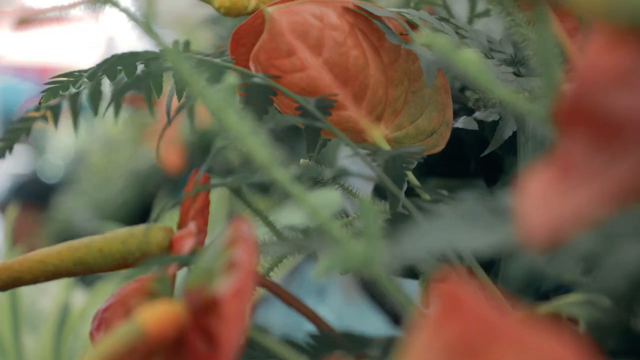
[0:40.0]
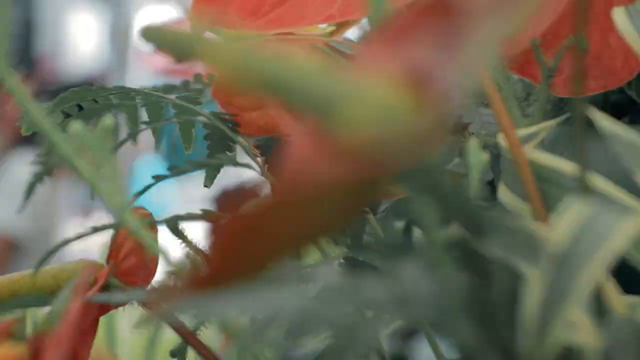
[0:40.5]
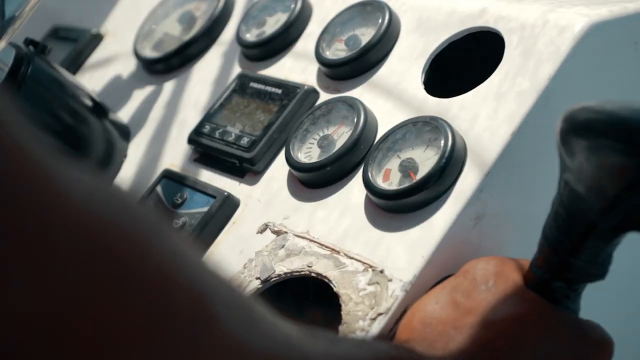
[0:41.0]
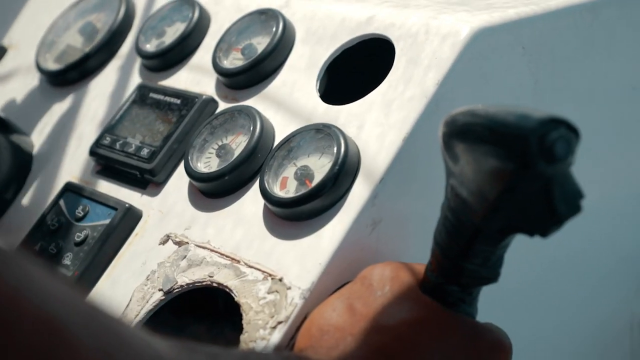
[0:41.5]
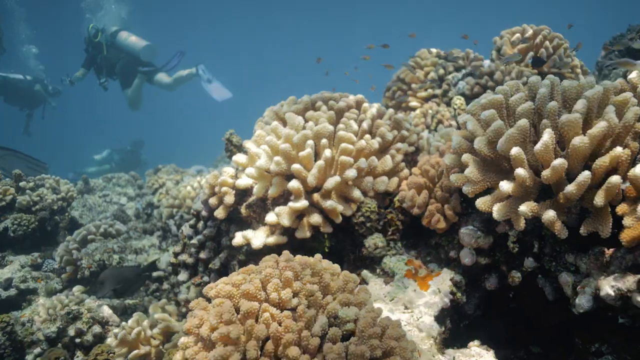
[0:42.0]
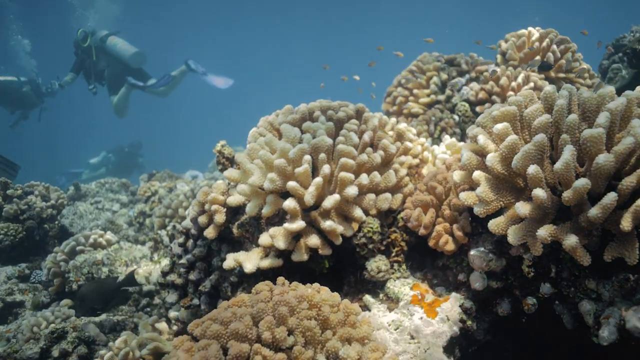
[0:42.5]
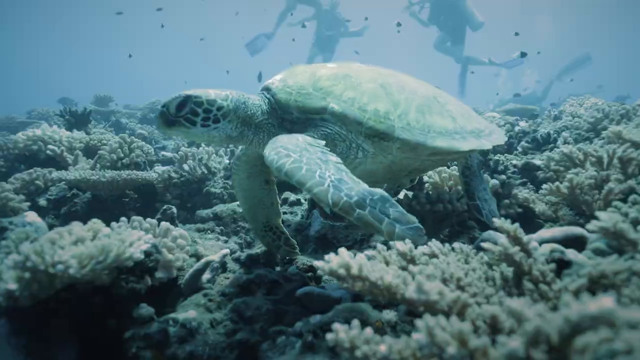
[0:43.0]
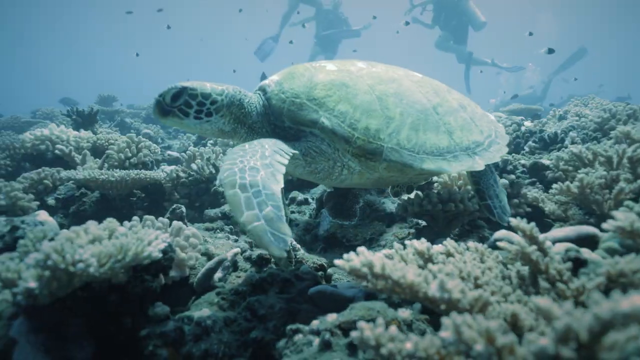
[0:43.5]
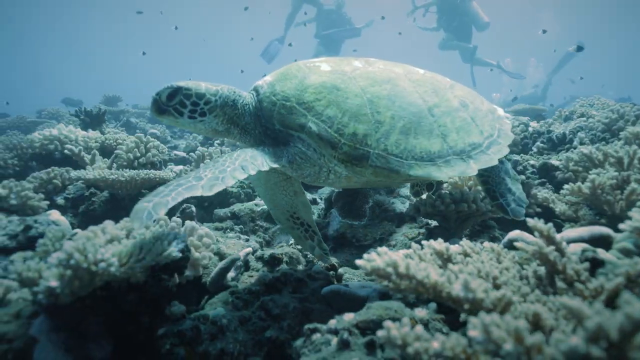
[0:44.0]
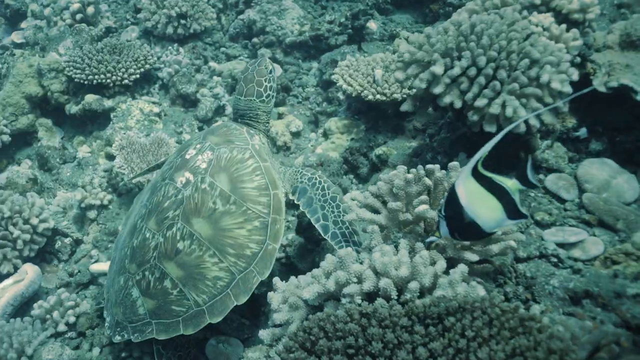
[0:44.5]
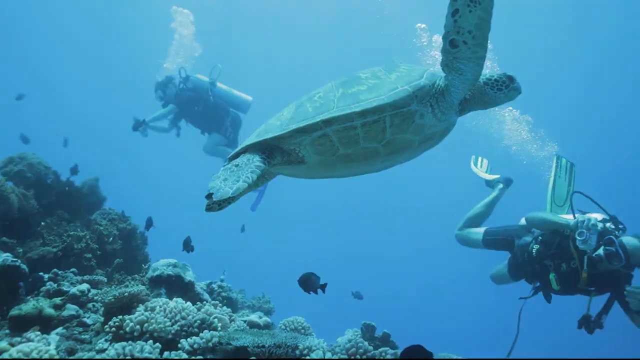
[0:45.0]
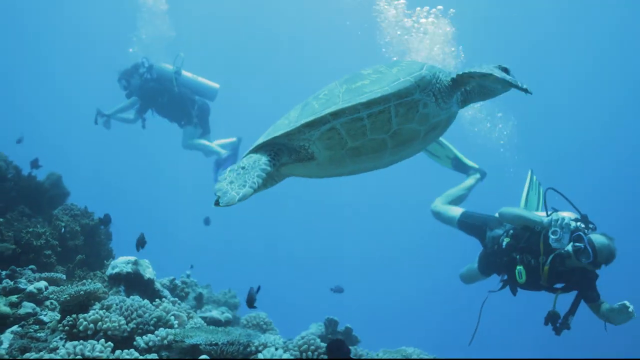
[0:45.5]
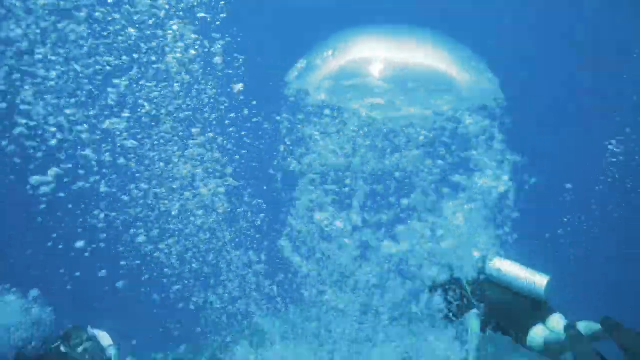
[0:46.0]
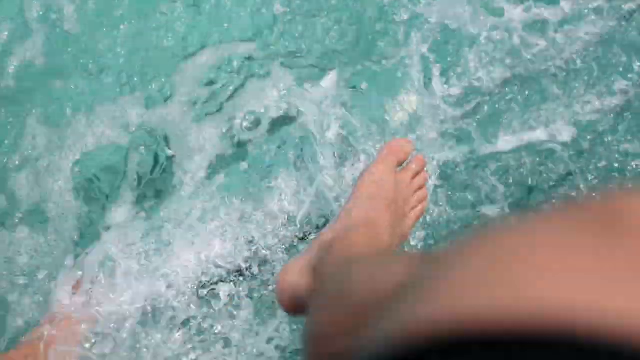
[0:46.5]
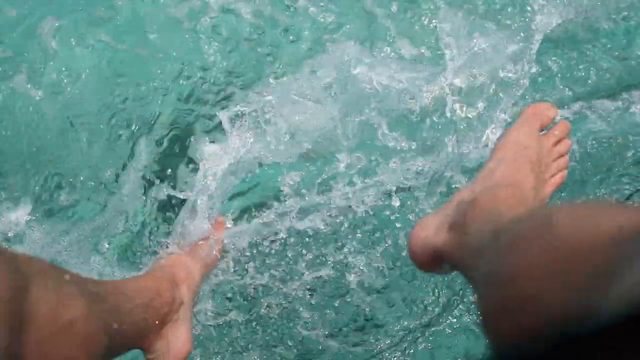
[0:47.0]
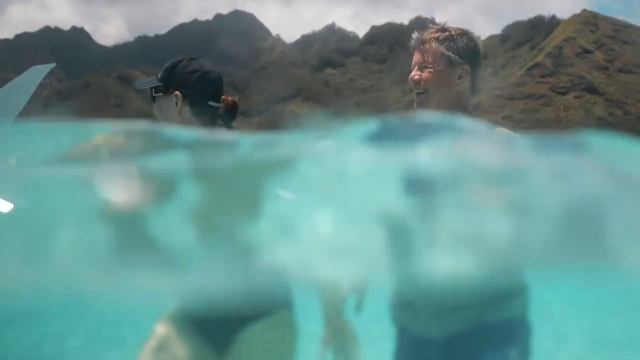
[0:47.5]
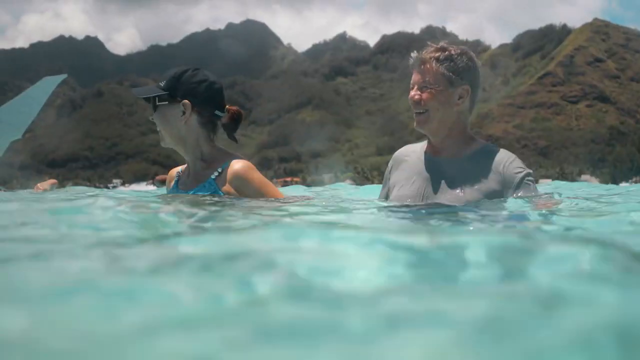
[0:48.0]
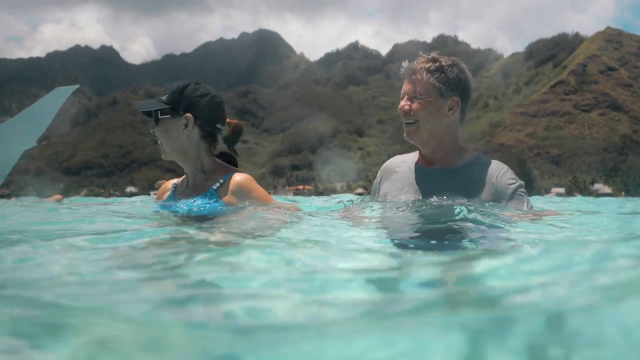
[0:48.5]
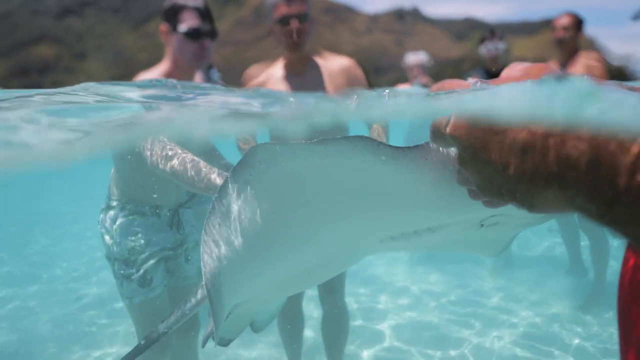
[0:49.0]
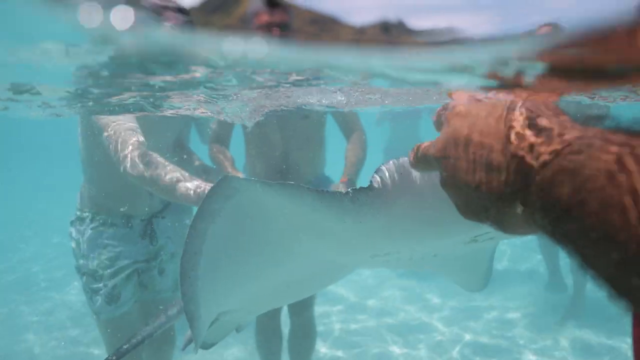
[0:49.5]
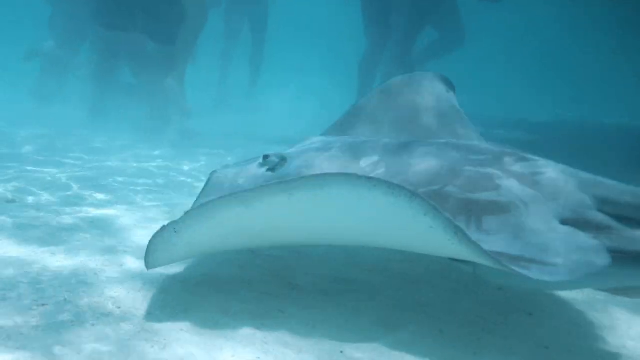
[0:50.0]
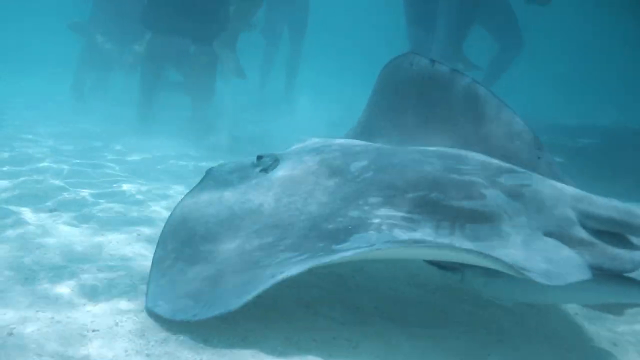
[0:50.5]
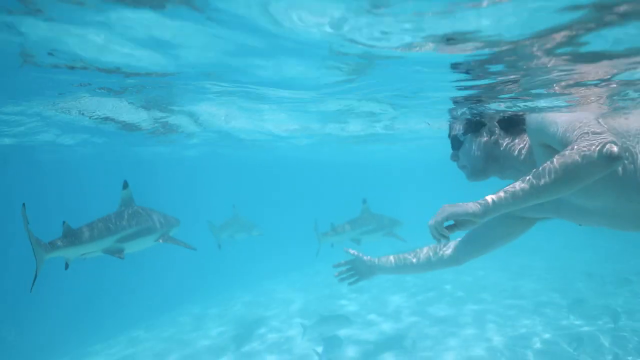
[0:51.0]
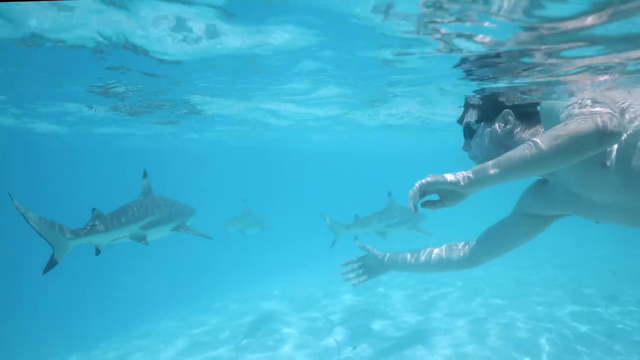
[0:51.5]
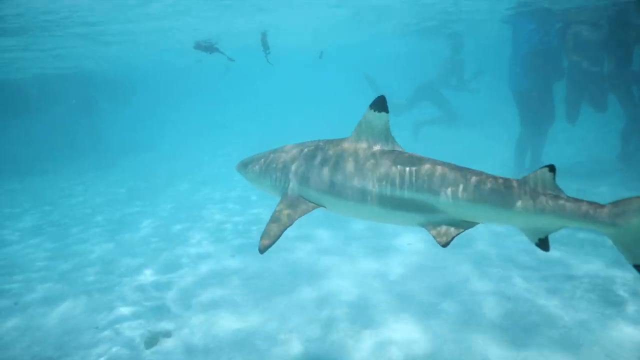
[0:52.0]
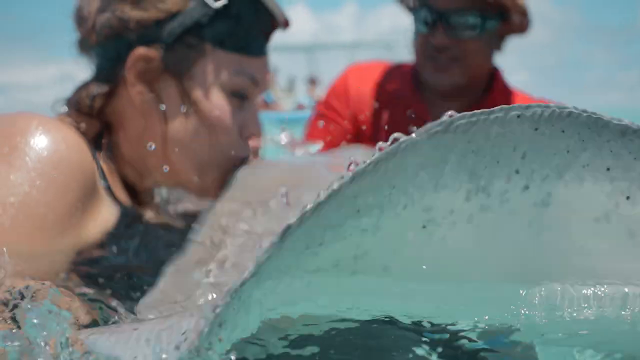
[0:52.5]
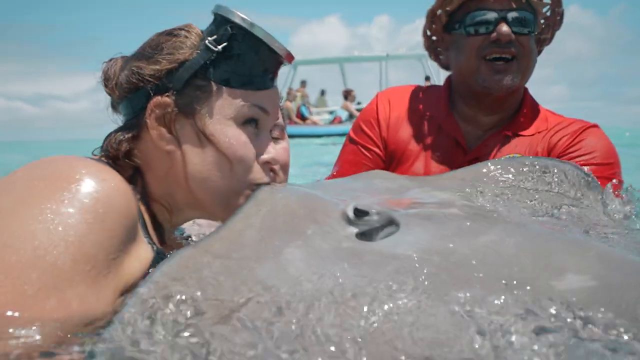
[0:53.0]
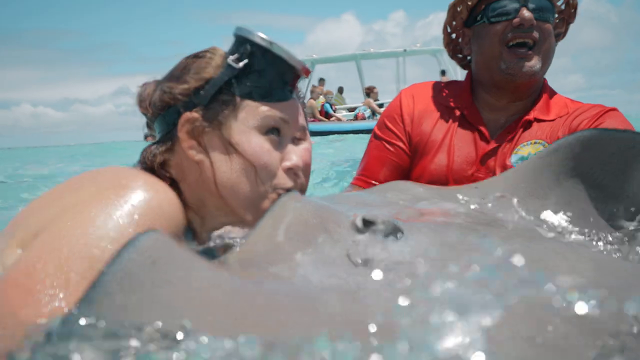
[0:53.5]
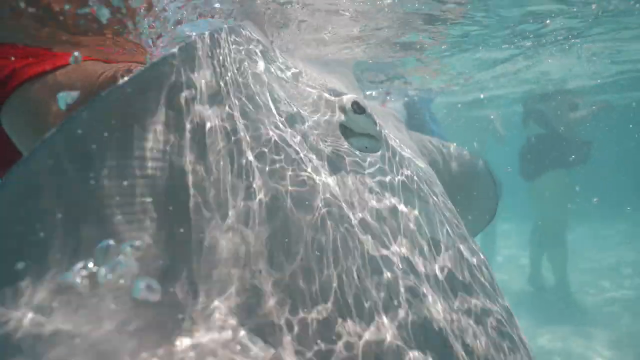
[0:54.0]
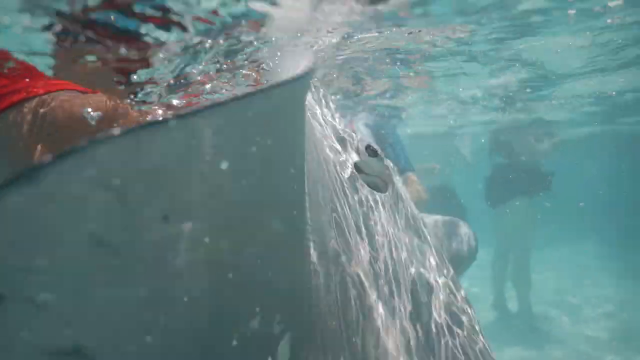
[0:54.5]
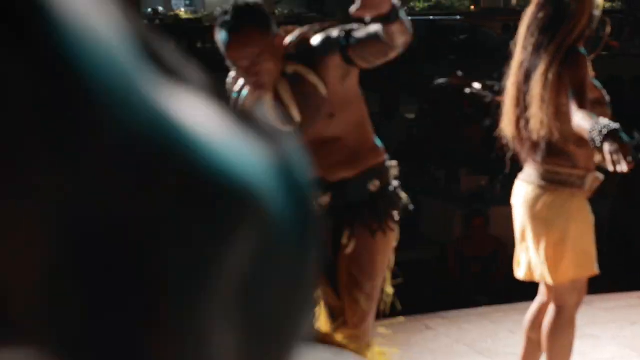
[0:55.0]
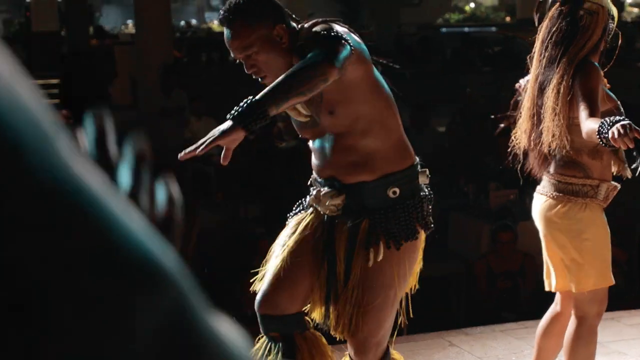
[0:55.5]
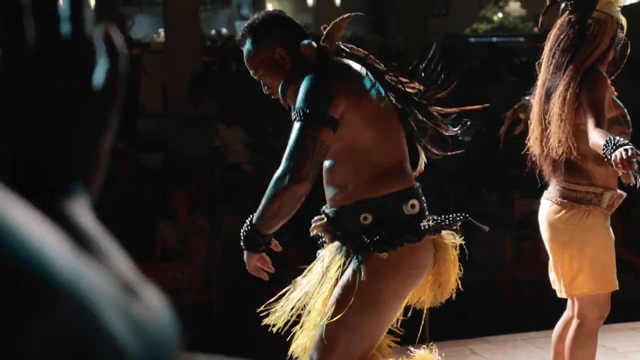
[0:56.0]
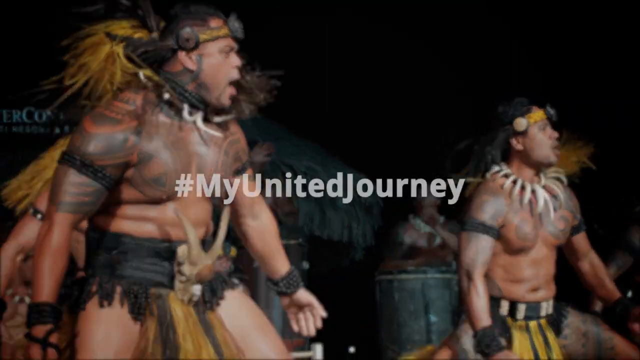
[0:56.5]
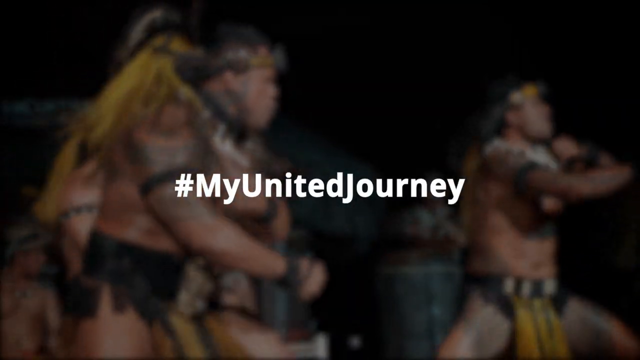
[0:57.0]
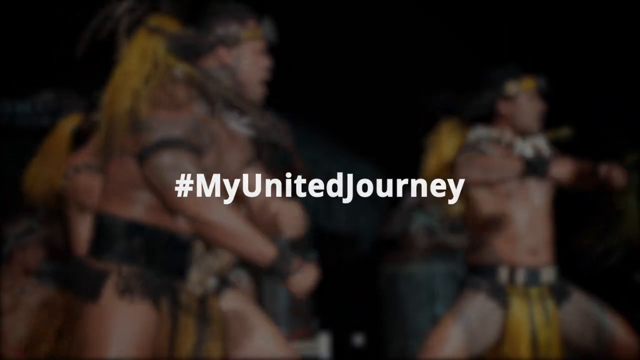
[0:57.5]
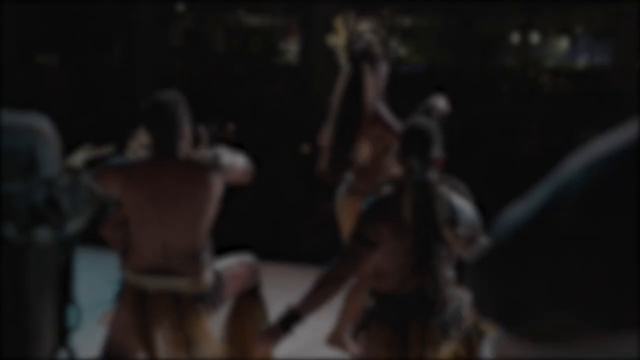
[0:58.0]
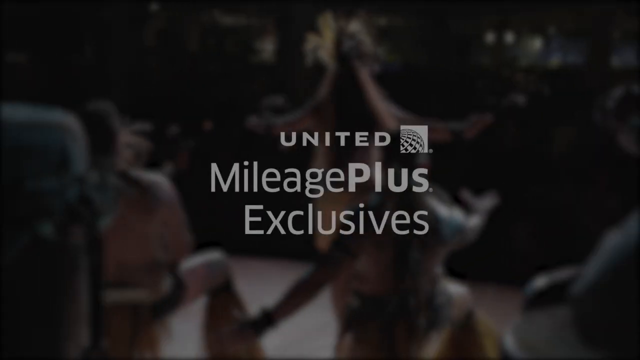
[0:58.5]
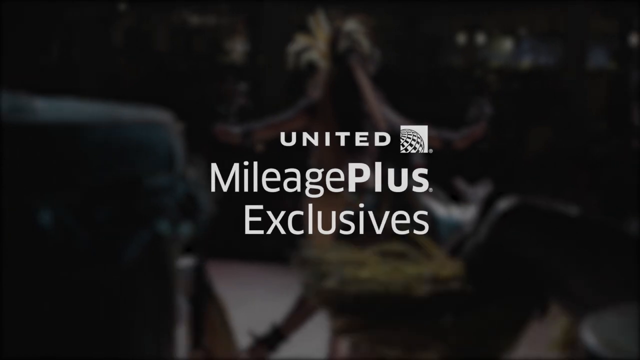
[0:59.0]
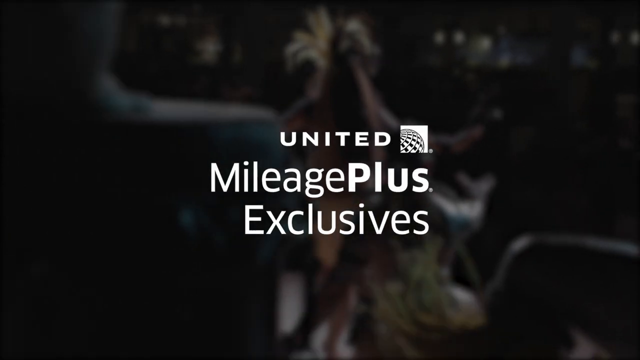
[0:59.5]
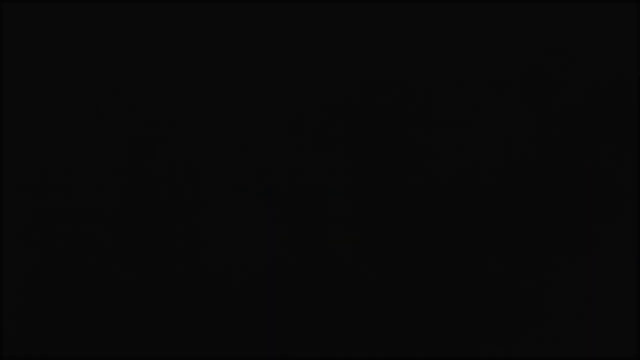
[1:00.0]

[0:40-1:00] Close-up shots show some plants, then a boat's interface with various sensors or gauges. Scuba divers are underwater among ocean wildlife, including fish and a turtle; the turtle swims next to two scuba divers. Some jellyfish appear, and a person's feet seem to hang above the water. A man and a woman smile in the water. What look like stingrays swim around people, and then a stingray swims along the ocean floor. A man swims with sharks nearby. A woman kisses a stingray, and a man stands next to a stingray. Some people dance, apparently belly dancing. White text then pops up reading "#My United Journey, United Mileage Plus Exclusives."